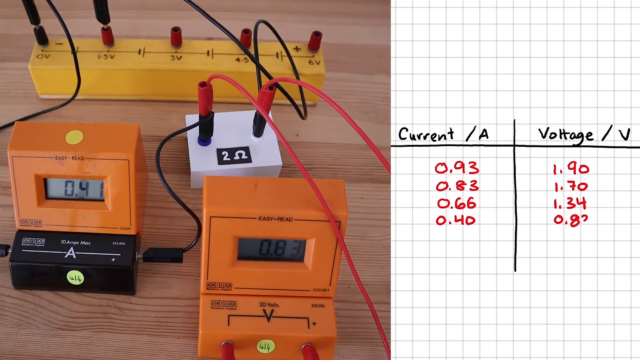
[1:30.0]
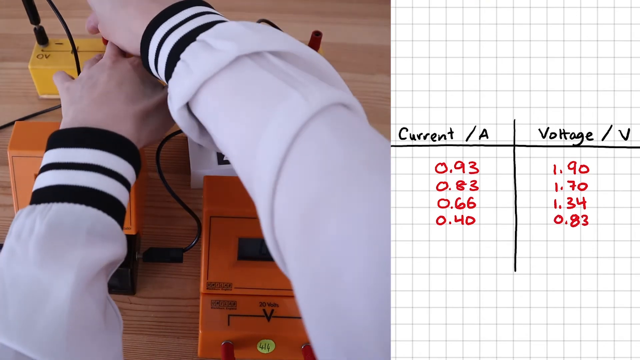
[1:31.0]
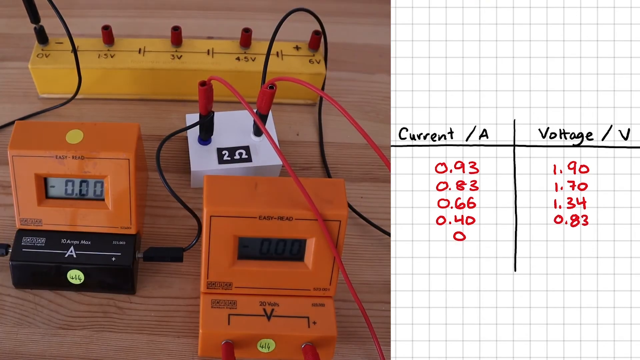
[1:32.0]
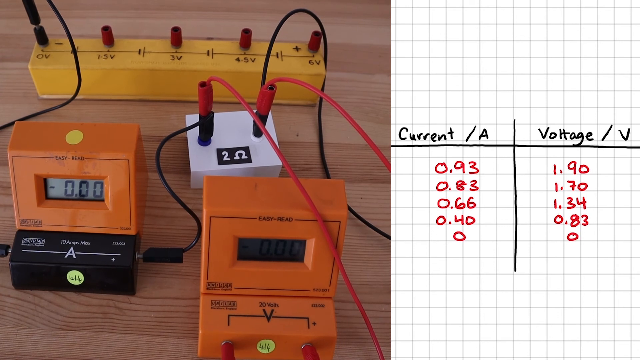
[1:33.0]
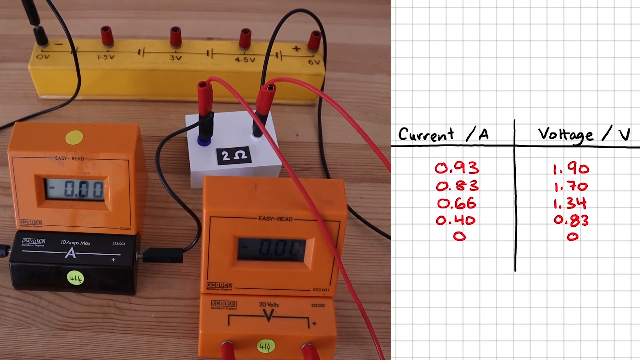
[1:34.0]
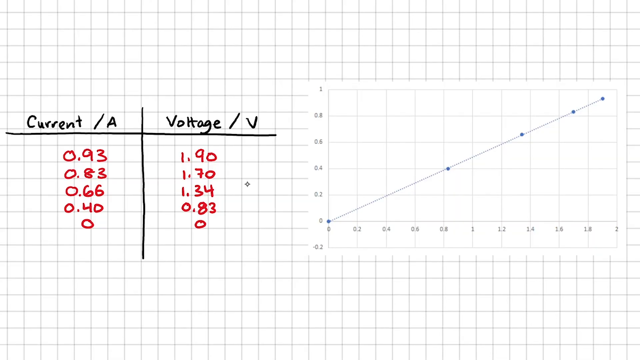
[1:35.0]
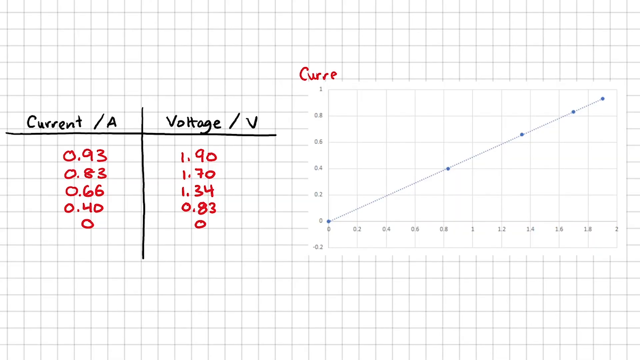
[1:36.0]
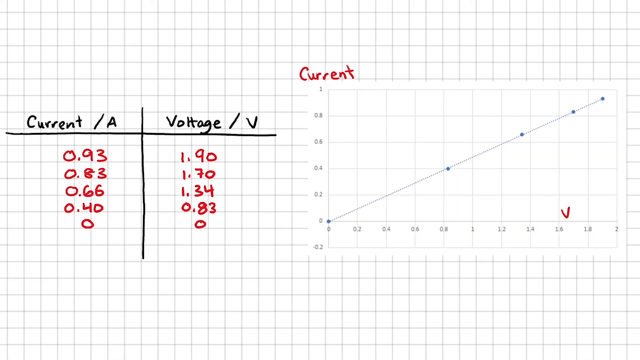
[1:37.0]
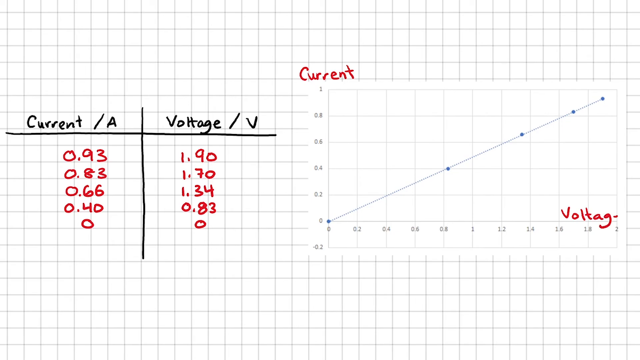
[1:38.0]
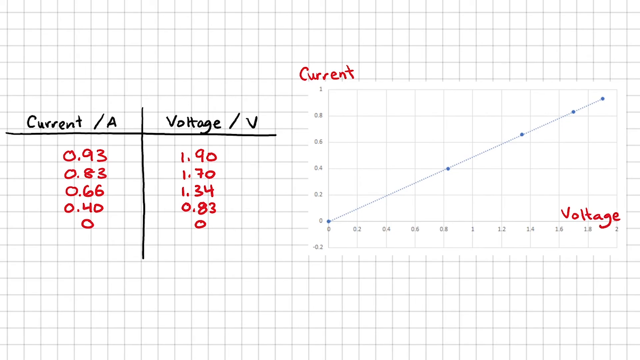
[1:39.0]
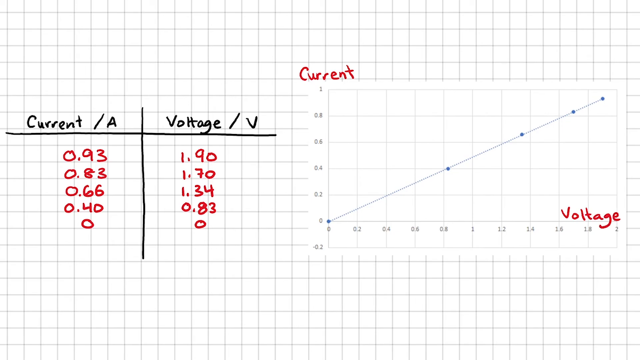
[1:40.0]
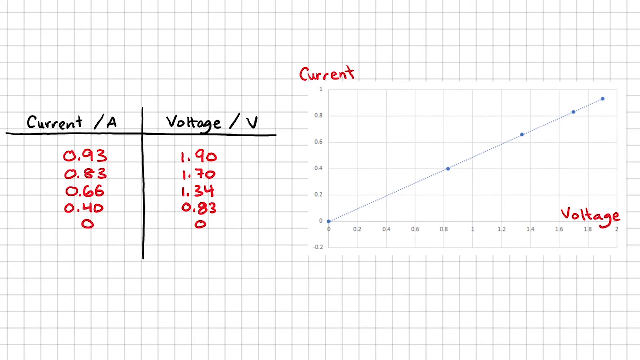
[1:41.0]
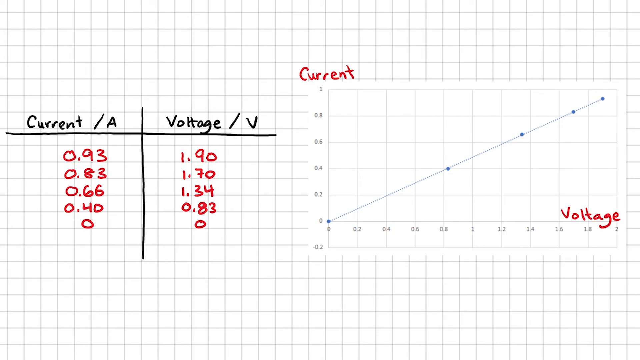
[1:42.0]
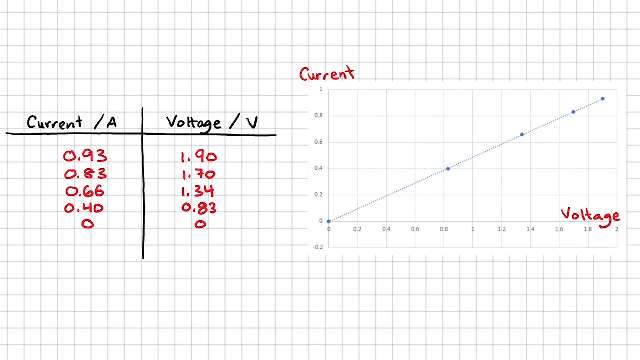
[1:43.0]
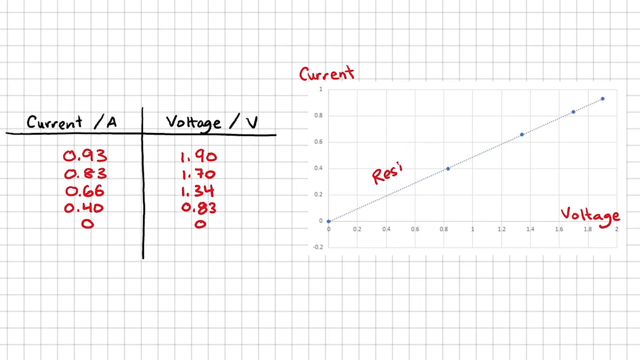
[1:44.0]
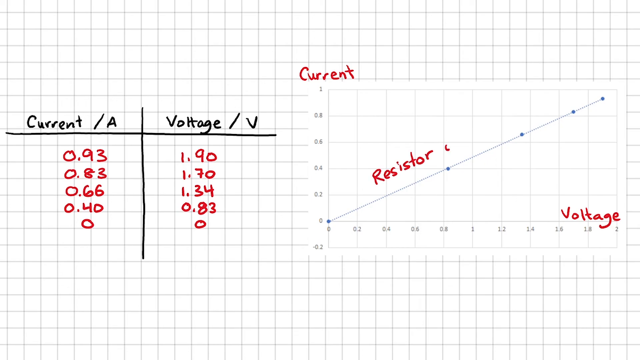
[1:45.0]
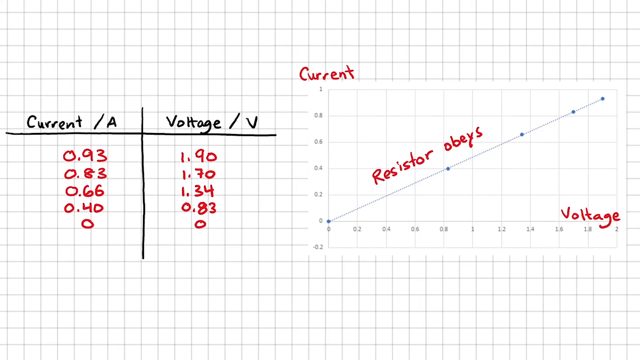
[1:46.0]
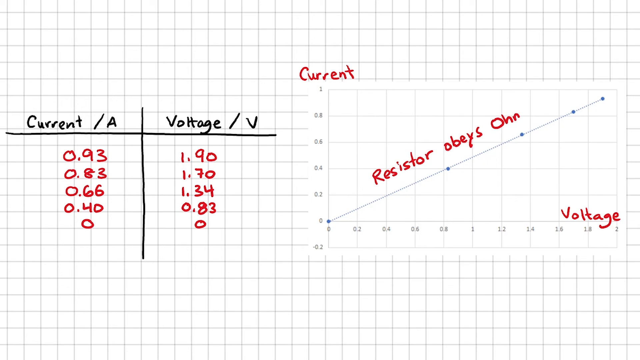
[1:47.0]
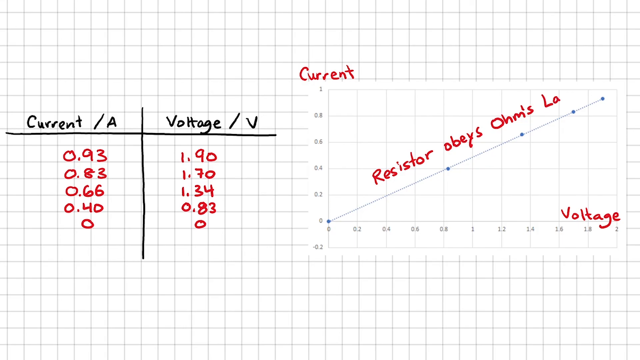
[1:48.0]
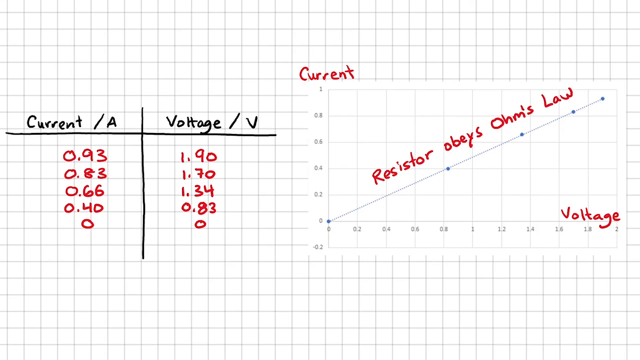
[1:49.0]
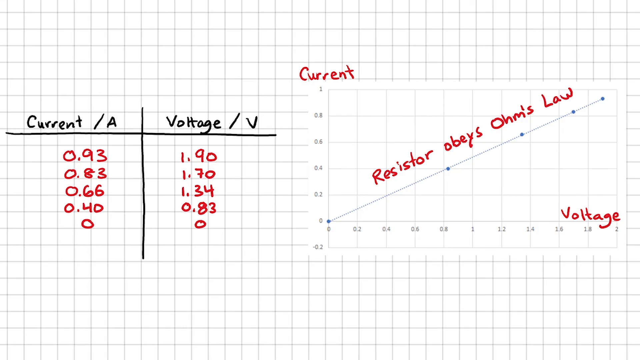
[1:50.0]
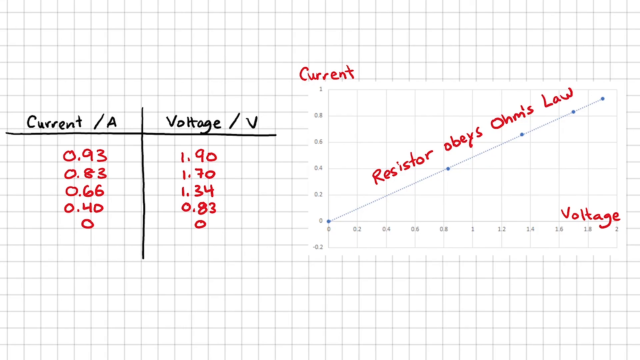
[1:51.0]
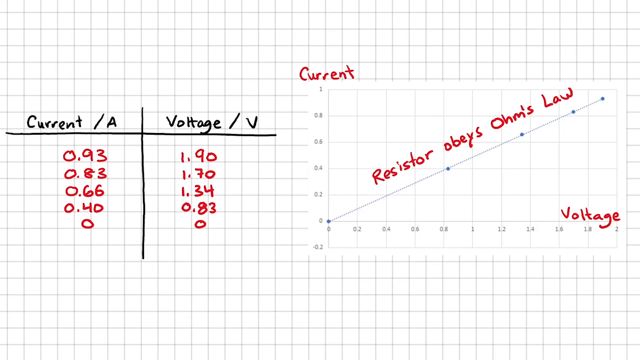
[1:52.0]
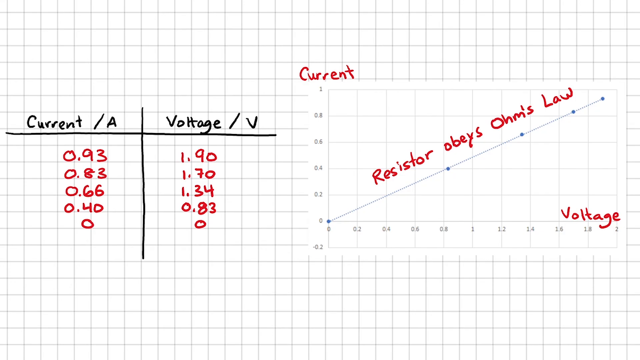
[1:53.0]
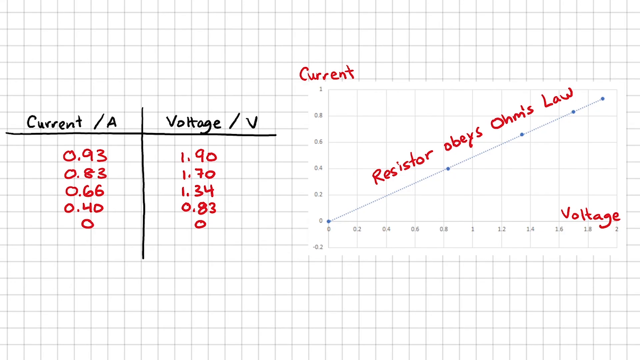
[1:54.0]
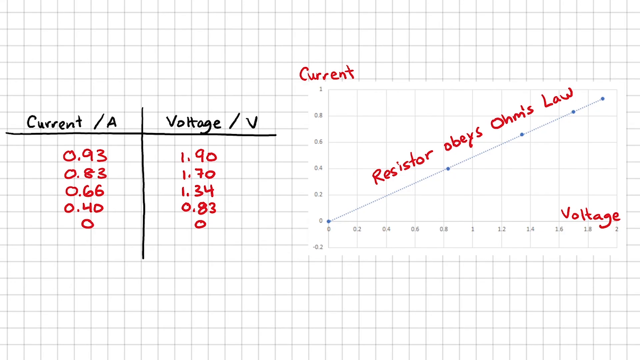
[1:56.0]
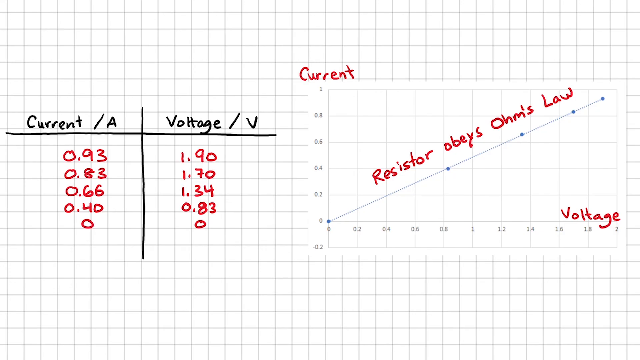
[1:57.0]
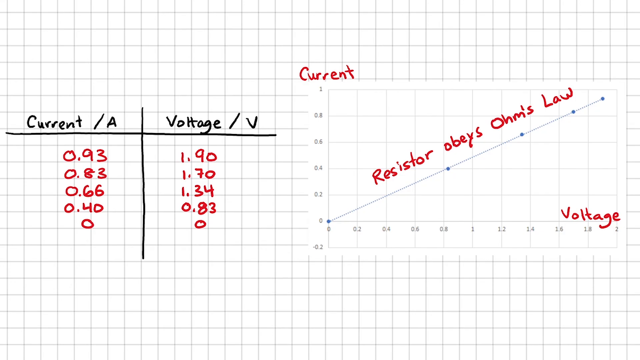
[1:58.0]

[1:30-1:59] Another adjustment is made and one of the plugs is taken out. Because the circuit is disconnected, the table on the right now shows zero under current and zero under voltage. The view then moves to another graph-paper screen: the table of current and voltage numbers is on the left, and on the right is a graph of current and voltage with a line going up diagonally from zero, showing that the resistor obeys OHM's law. The graph stays on screen for a while, its points on the right corresponding to the values in the table on the left and rising with each change made to the circuit connections.